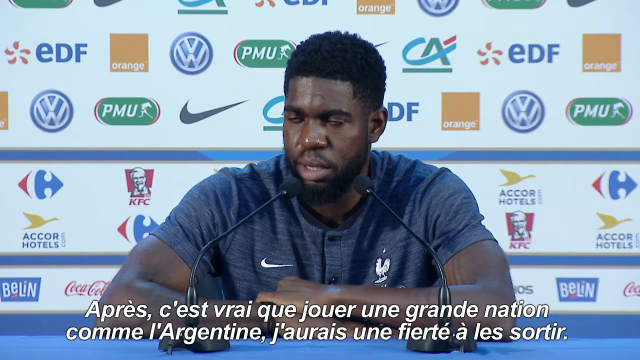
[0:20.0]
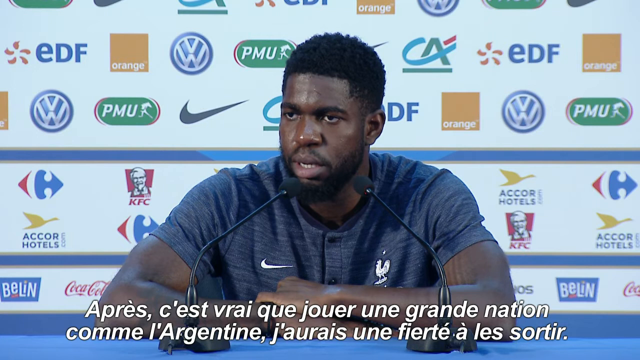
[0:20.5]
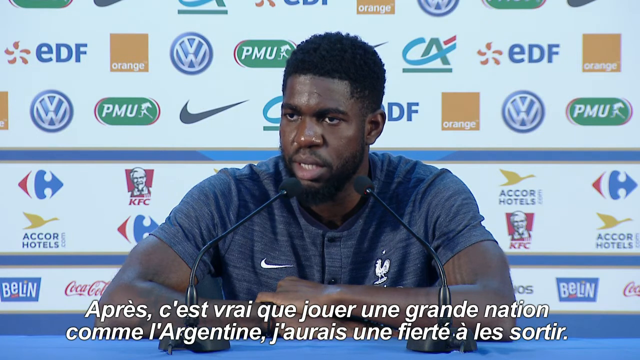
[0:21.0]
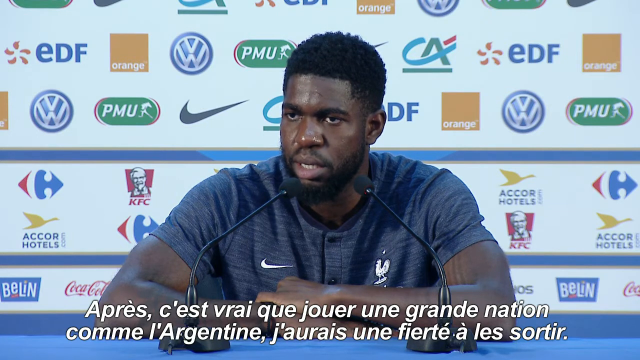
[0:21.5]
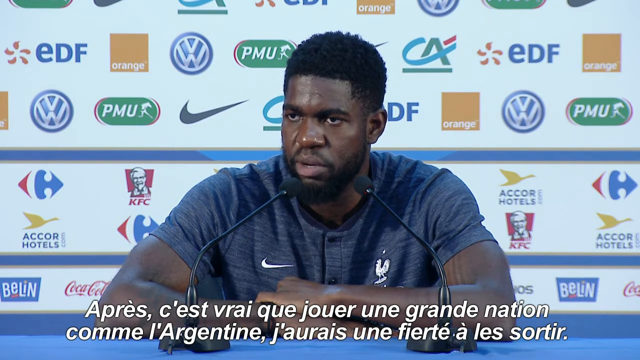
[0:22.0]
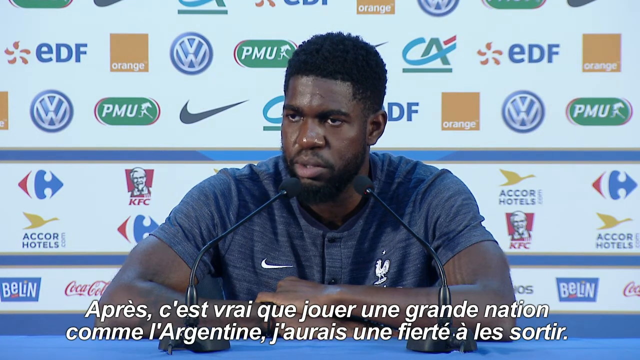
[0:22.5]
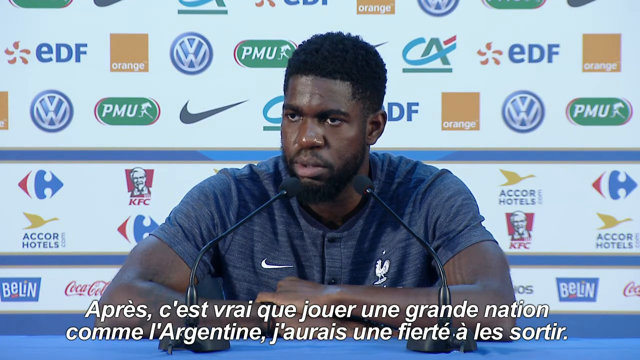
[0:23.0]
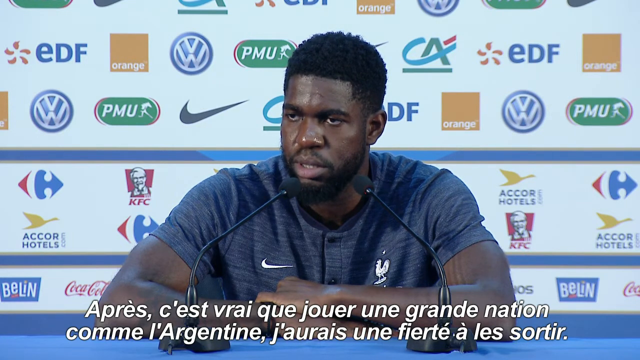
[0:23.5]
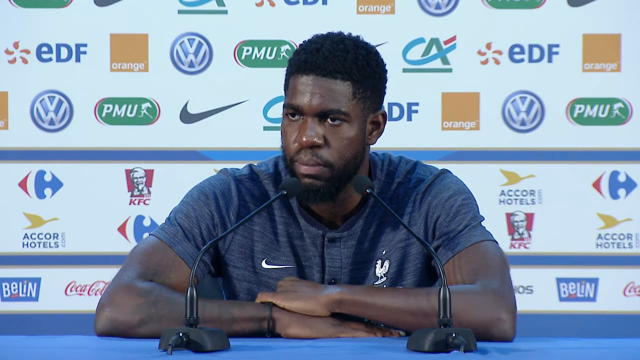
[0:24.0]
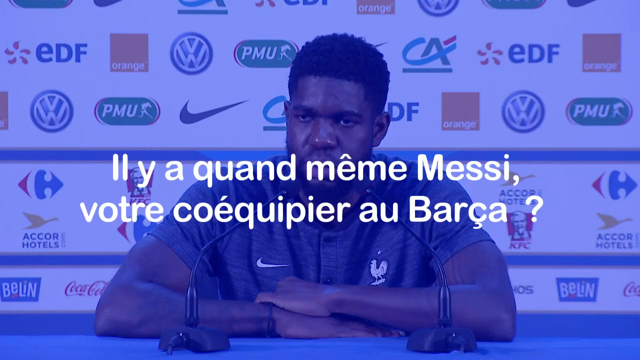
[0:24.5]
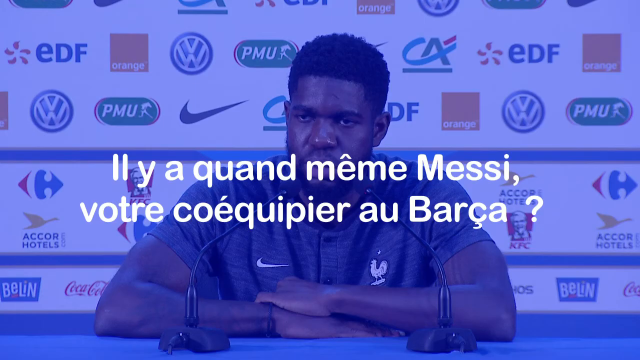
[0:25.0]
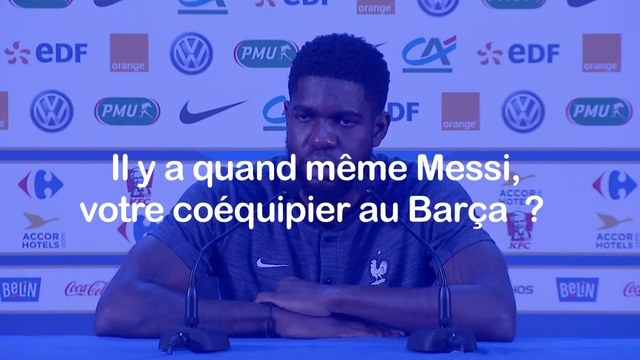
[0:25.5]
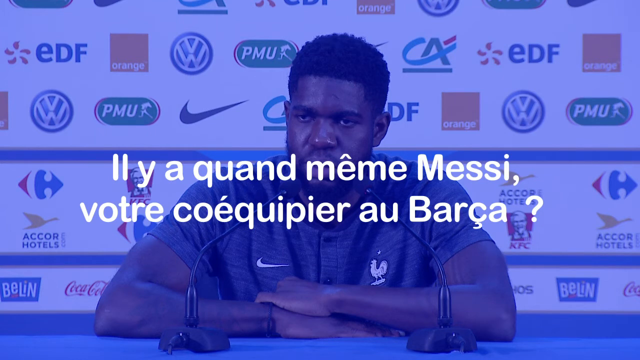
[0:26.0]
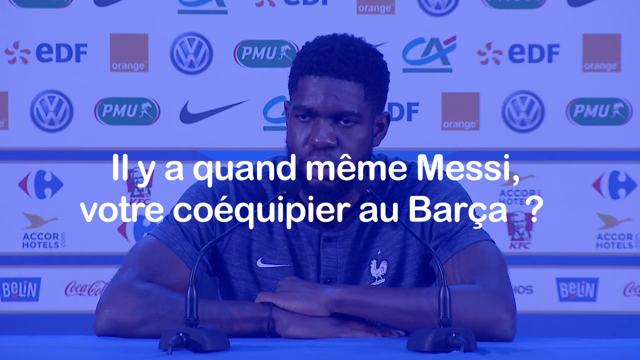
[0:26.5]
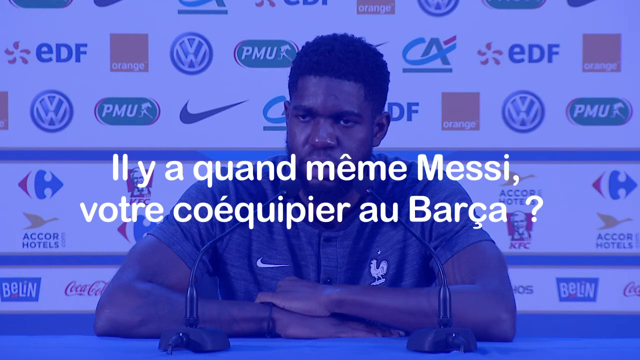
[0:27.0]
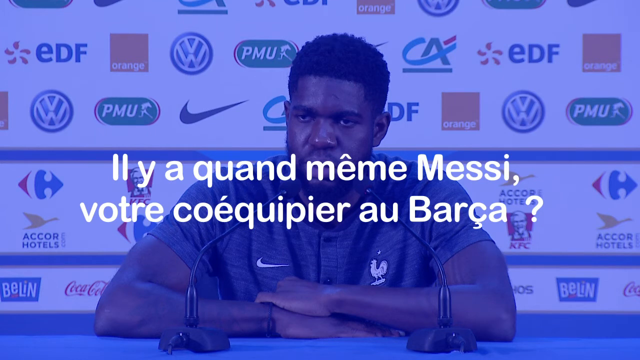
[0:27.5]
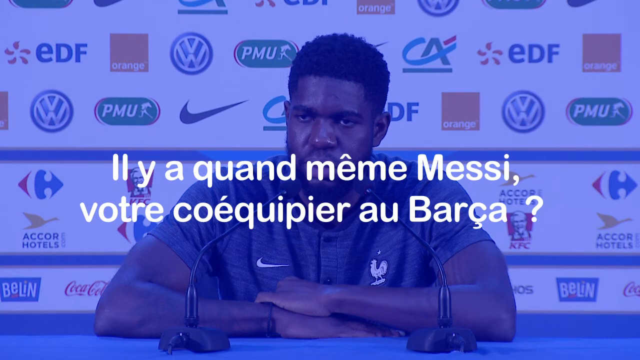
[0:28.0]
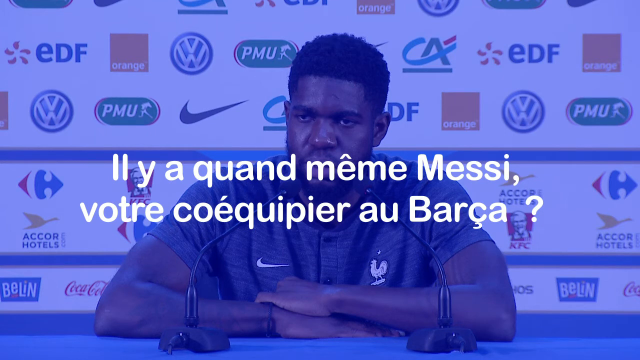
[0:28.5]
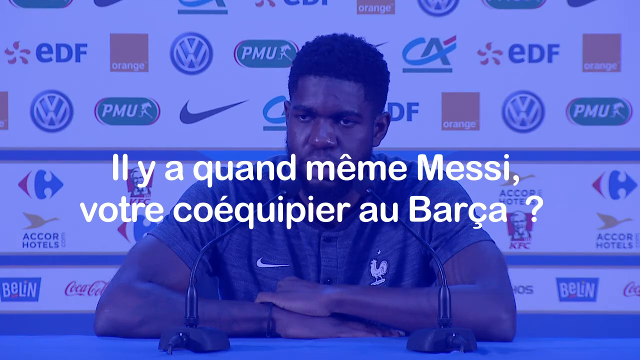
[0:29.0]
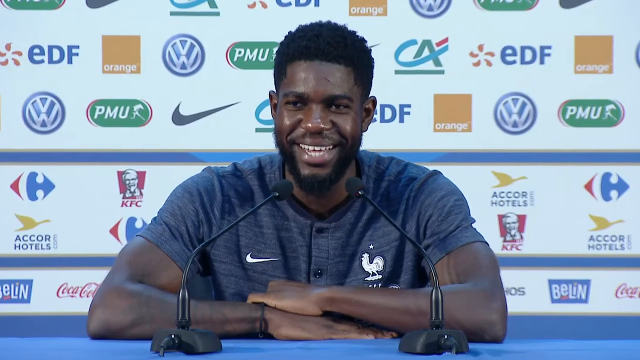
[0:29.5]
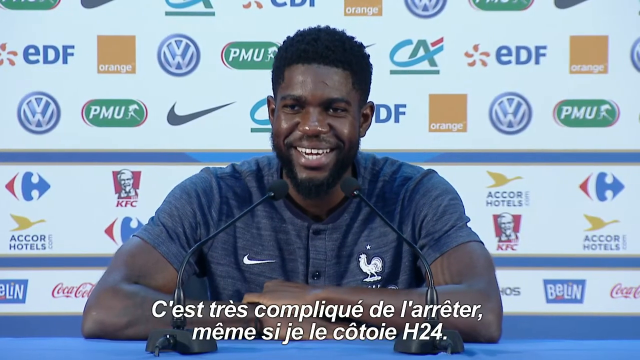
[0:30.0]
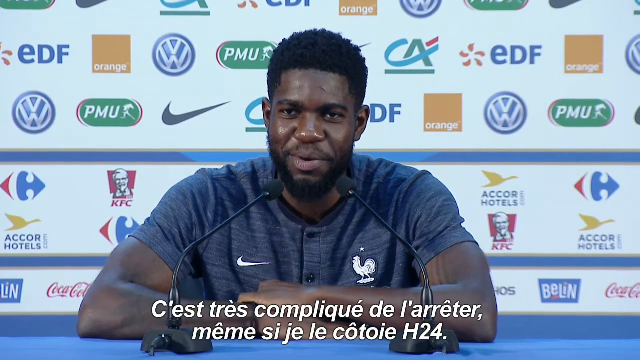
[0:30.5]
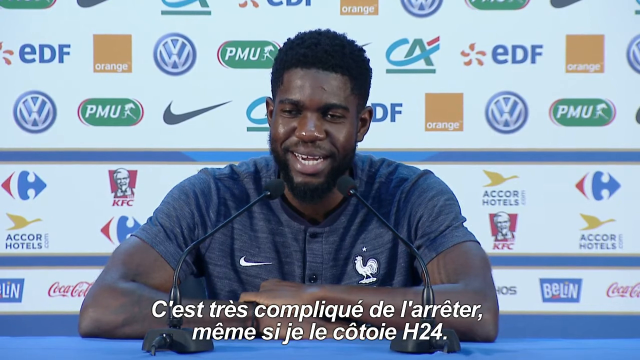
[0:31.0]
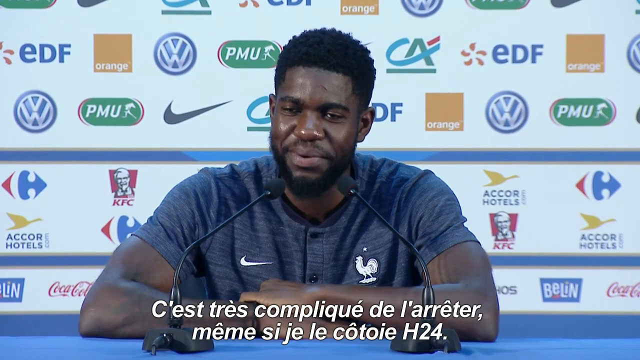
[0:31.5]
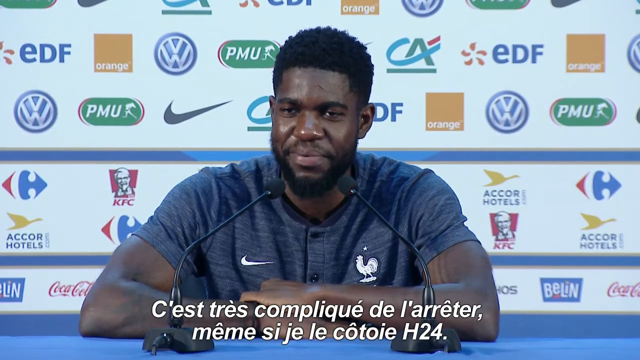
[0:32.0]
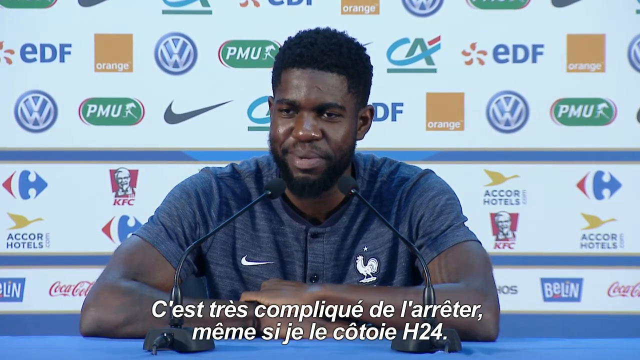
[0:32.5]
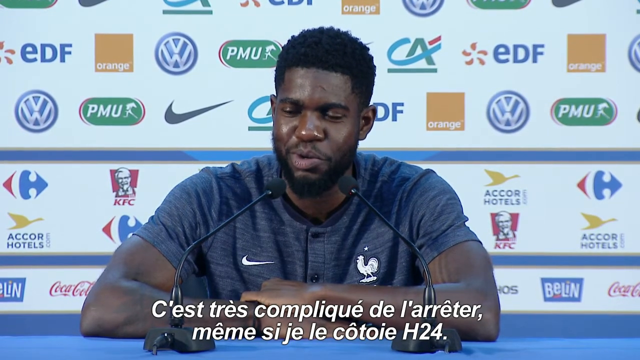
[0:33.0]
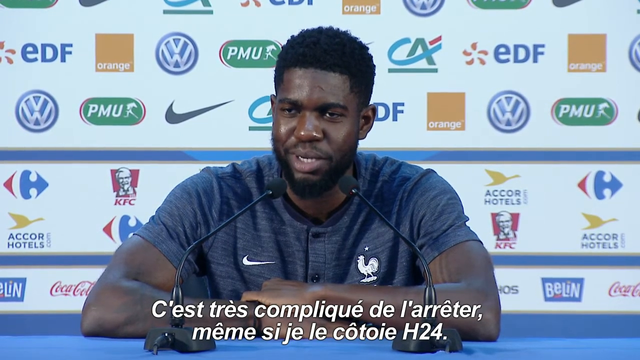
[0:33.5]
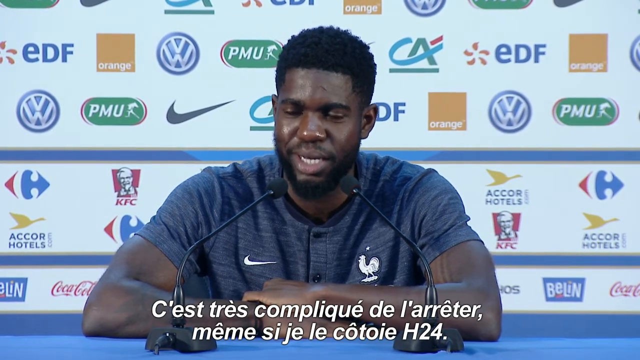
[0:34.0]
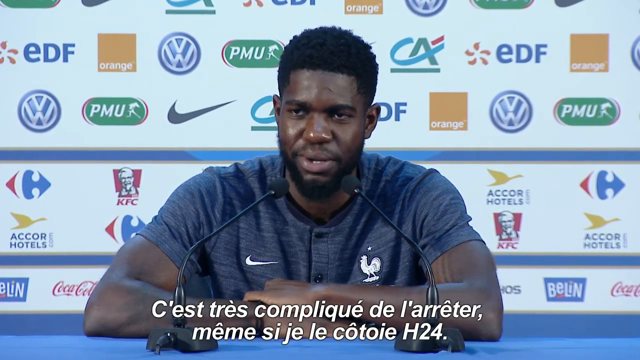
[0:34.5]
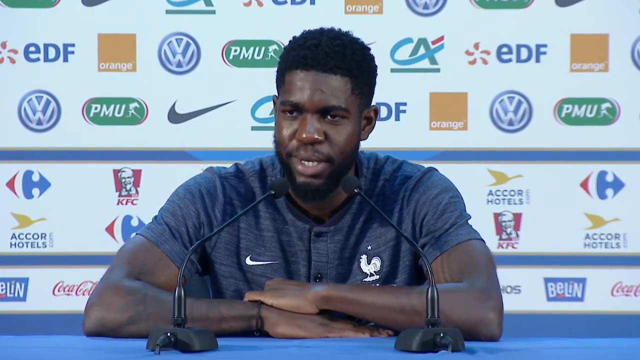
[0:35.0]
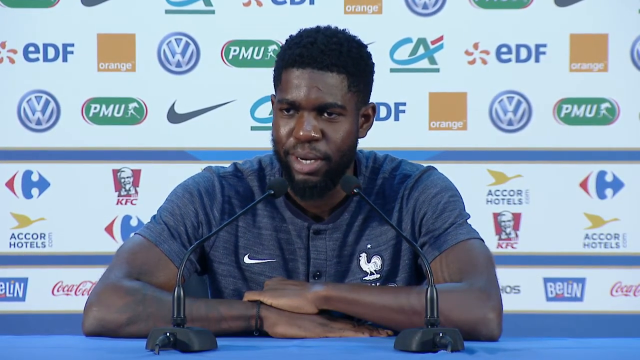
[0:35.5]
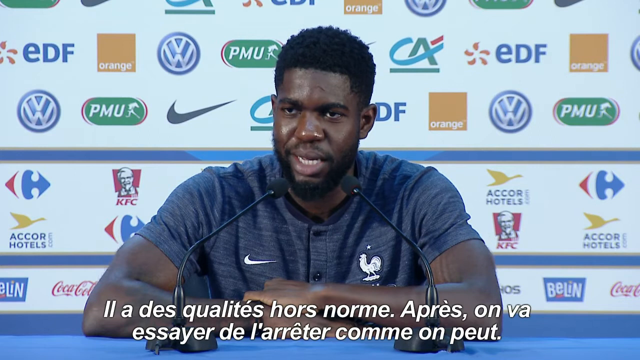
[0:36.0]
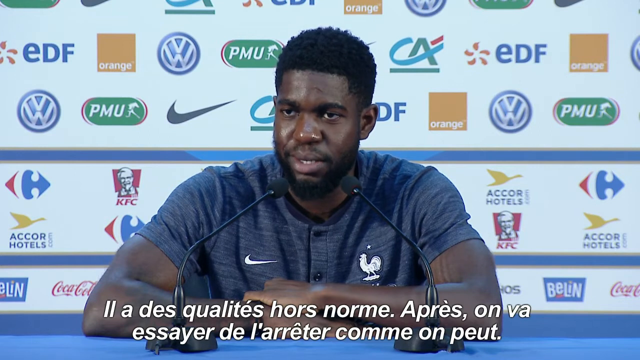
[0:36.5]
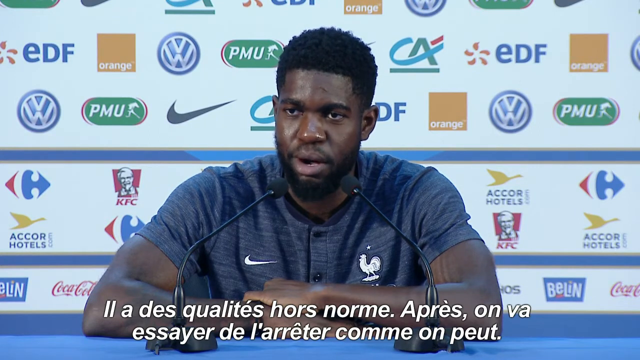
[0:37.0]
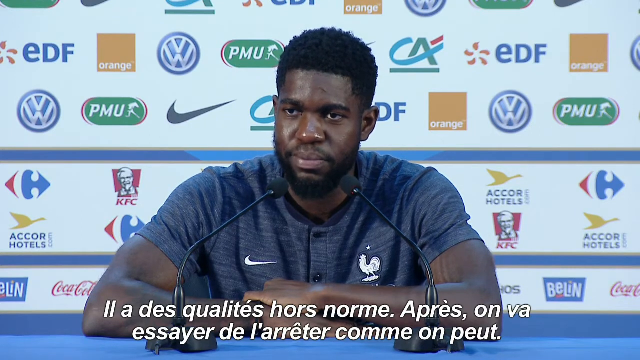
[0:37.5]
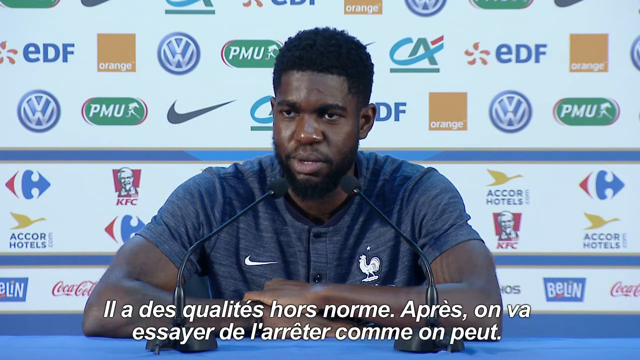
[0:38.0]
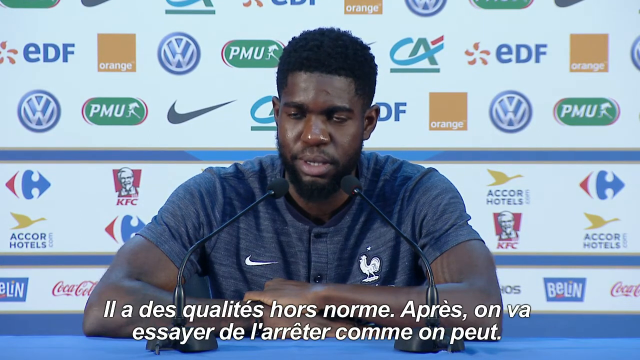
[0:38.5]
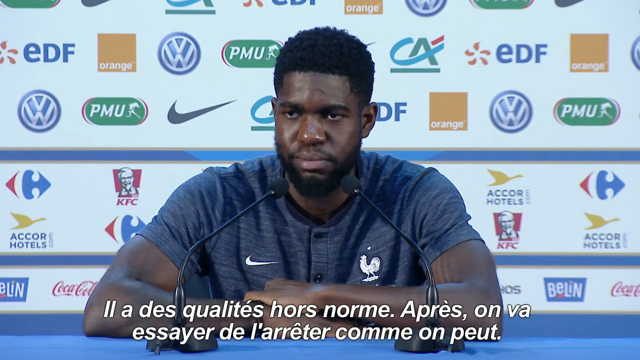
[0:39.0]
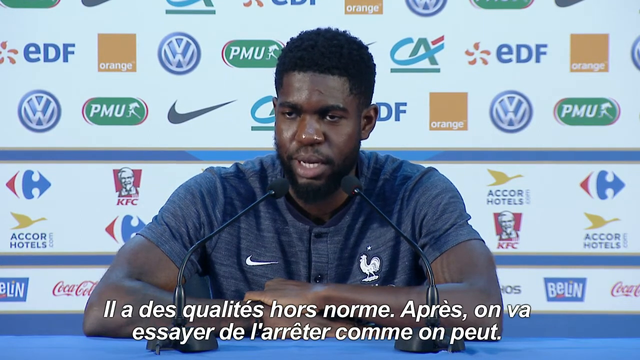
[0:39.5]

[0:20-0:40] The player opens his eyes and his head moves forward slightly as he looks at the reporter to his right. His mouth is slightly open, showing his bottom teeth, and his jaw drops as he talks, his mouth a little wider, with a crease on the right side of his face. He blinks, his lips come together almost in an "oh" shape, he blinks again, then his mouth closes and he looks at the reporter. The interview freezes and a question appears over a blue coloring on the screen. When the video goes live again, the player is looking straight forward and laughing, his head up and his mouth wide, showing his teeth, with creases on each side of his face. As he laughs his shoulders drop slightly, he closes his eyes, and his lips come together but stay wide. As he answers his eyes are narrower and he still has a playful expression, giving a slight head shake and then a bigger one. He drops his jaw and looks up, eyes still narrow, with another head shake. His eyes widen slightly as he answers, he blinks, his left shoulder shrugs slightly, and with his mouth open he begins talking.